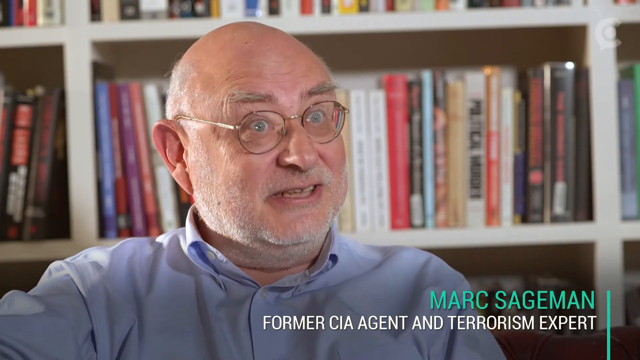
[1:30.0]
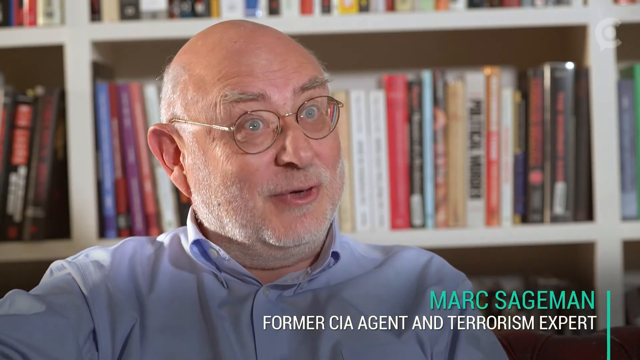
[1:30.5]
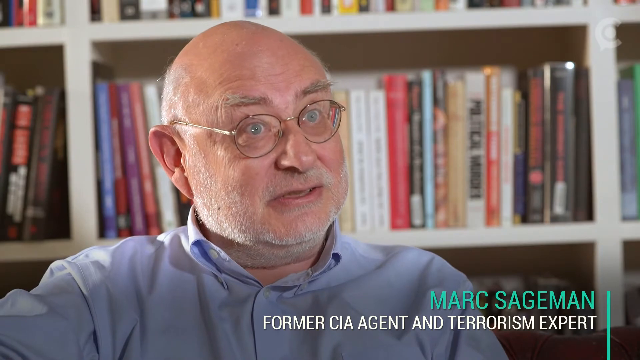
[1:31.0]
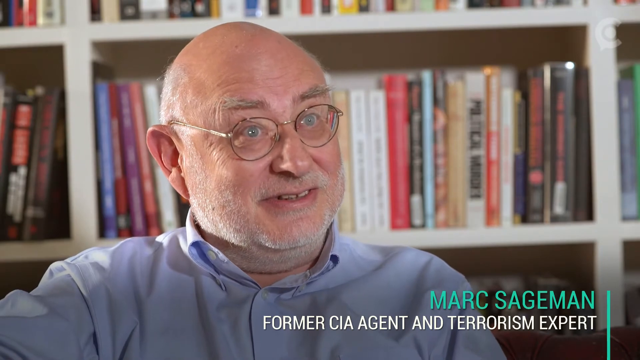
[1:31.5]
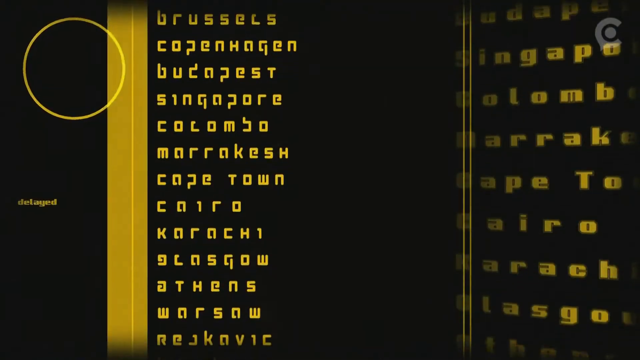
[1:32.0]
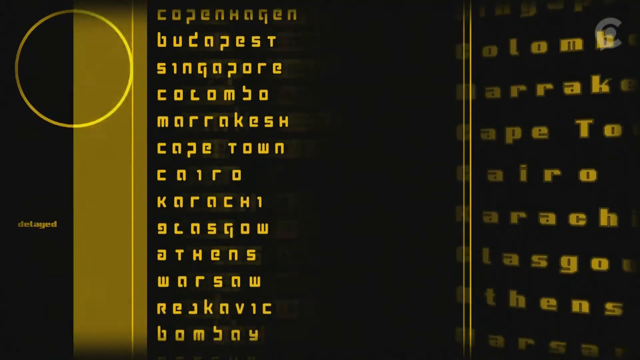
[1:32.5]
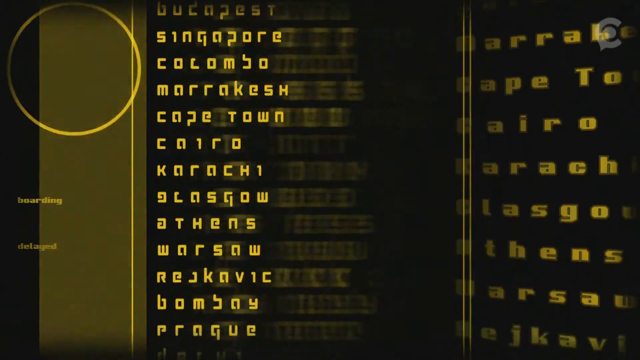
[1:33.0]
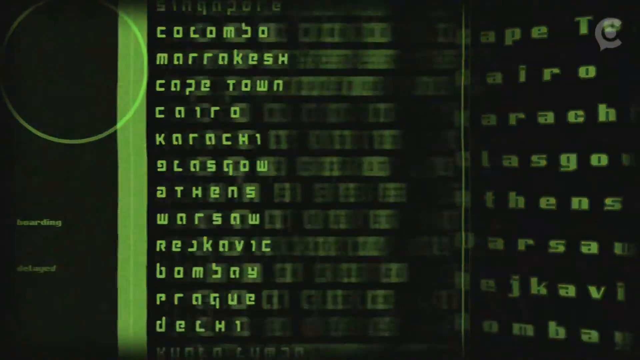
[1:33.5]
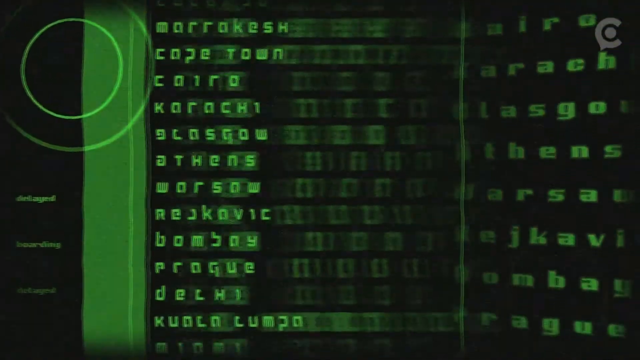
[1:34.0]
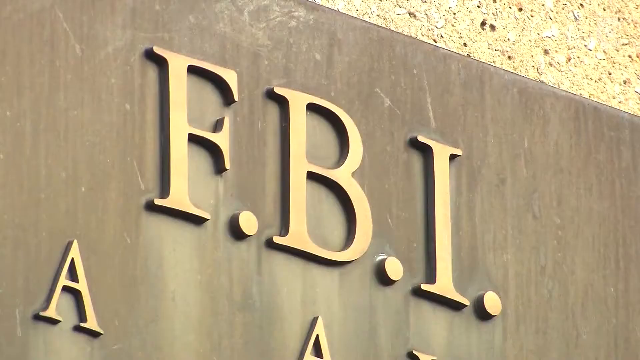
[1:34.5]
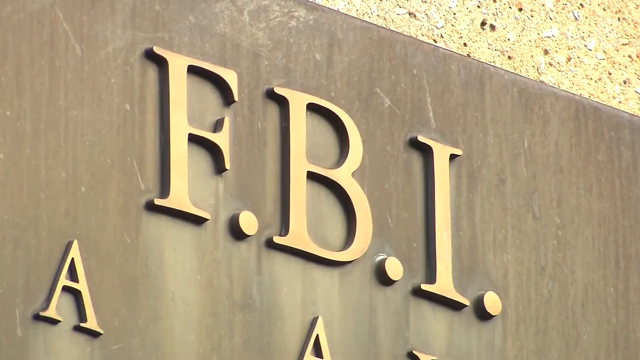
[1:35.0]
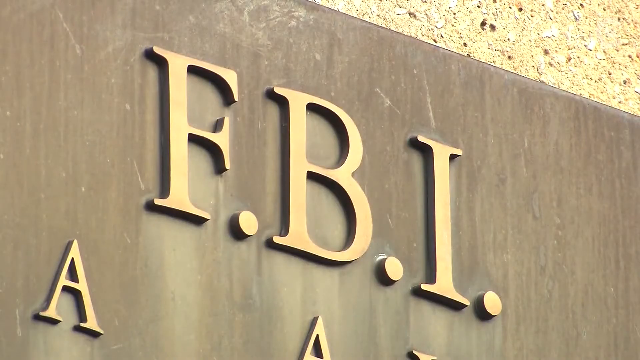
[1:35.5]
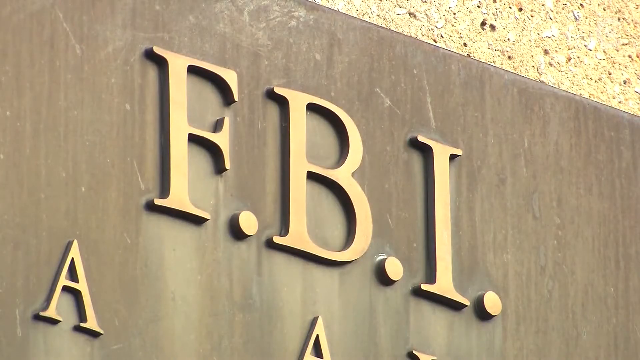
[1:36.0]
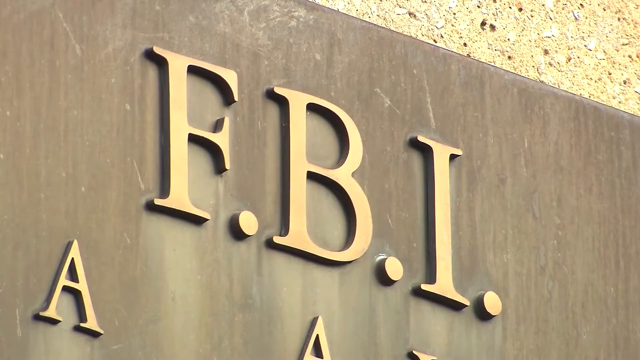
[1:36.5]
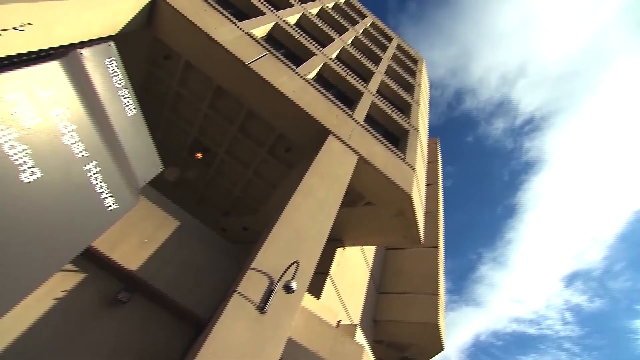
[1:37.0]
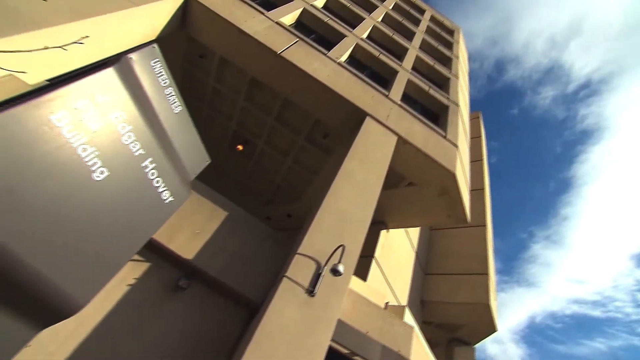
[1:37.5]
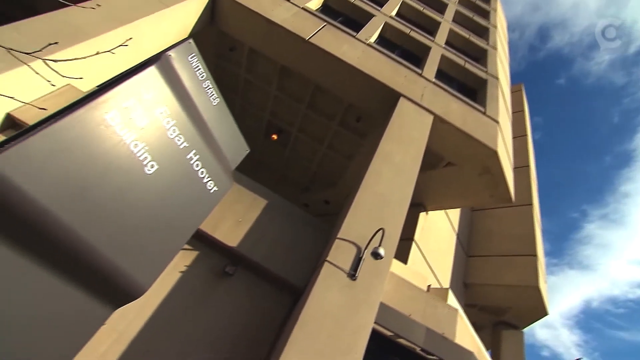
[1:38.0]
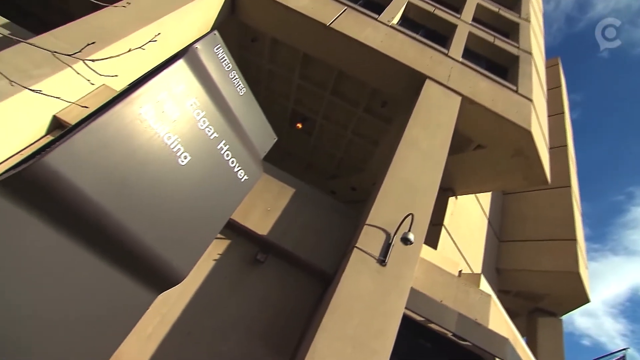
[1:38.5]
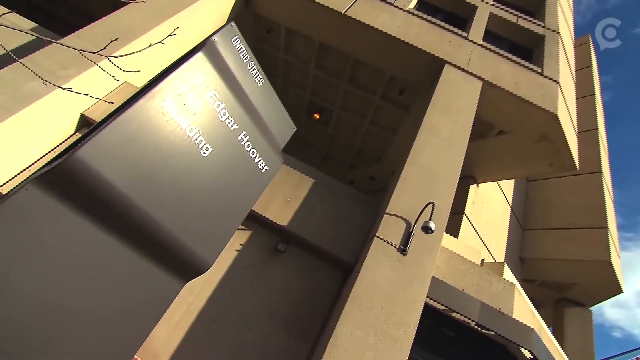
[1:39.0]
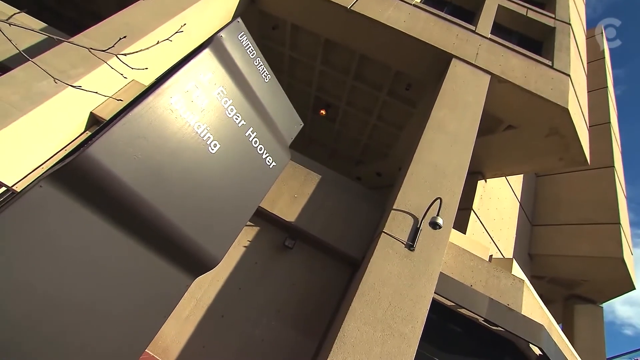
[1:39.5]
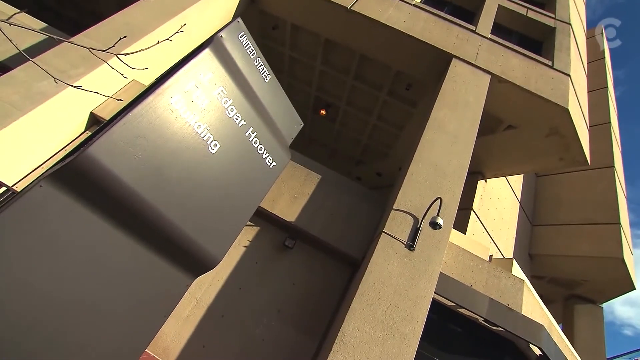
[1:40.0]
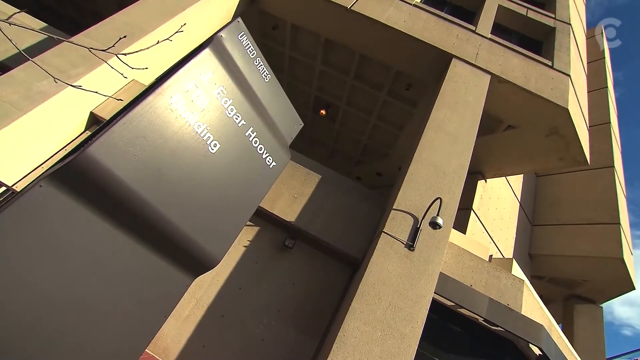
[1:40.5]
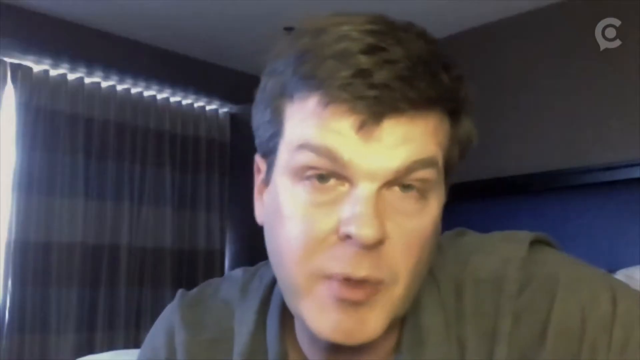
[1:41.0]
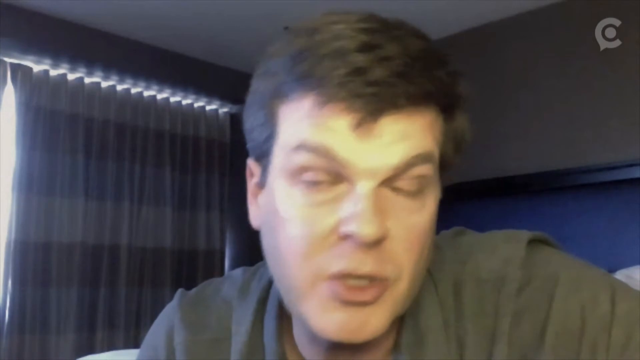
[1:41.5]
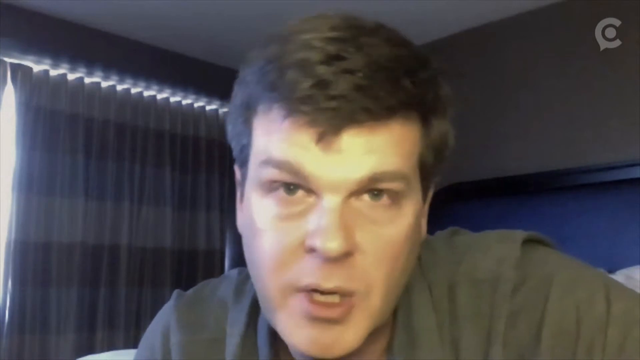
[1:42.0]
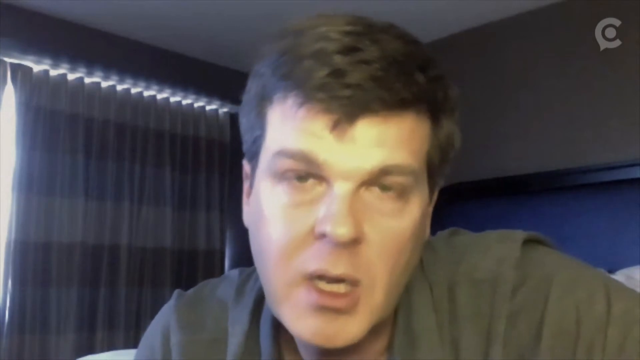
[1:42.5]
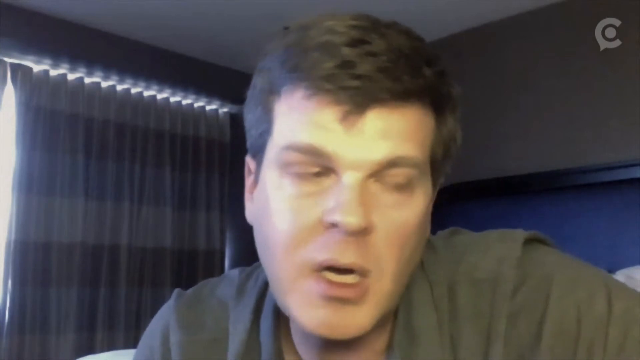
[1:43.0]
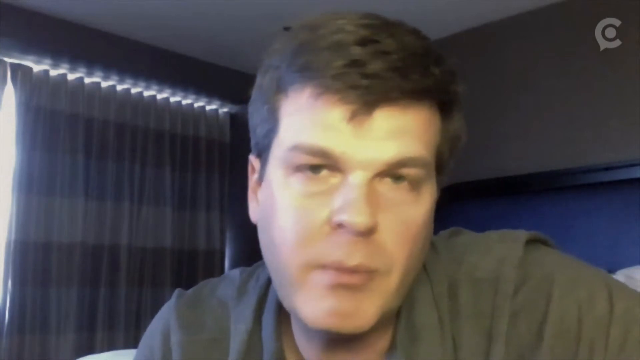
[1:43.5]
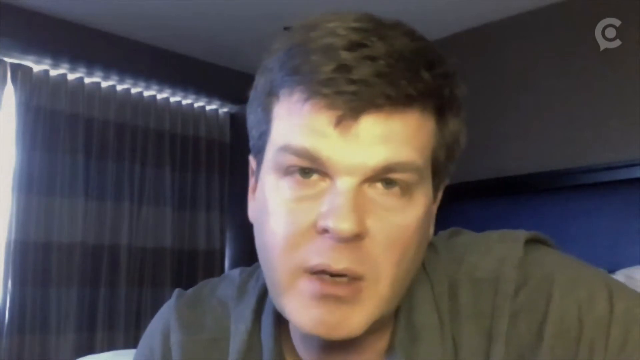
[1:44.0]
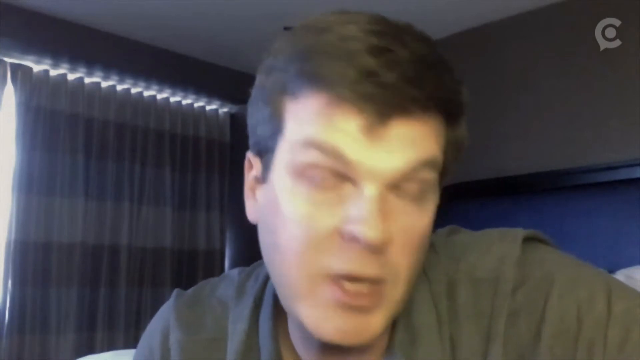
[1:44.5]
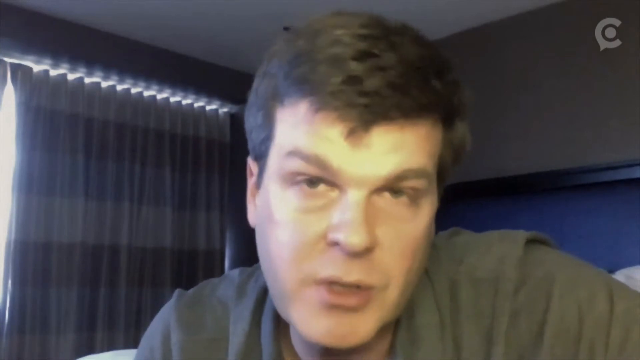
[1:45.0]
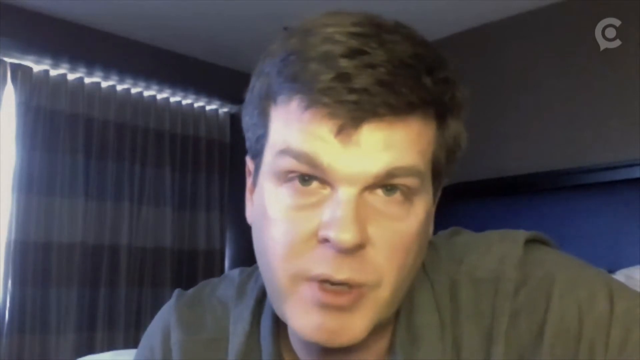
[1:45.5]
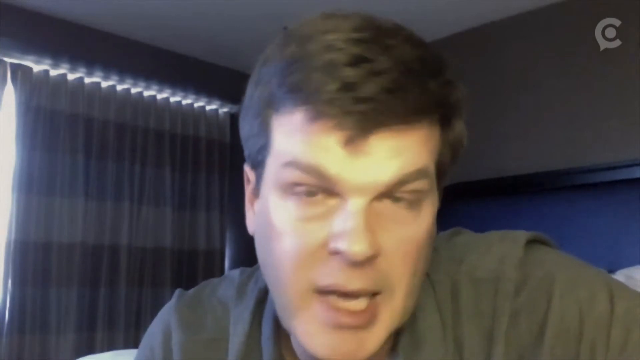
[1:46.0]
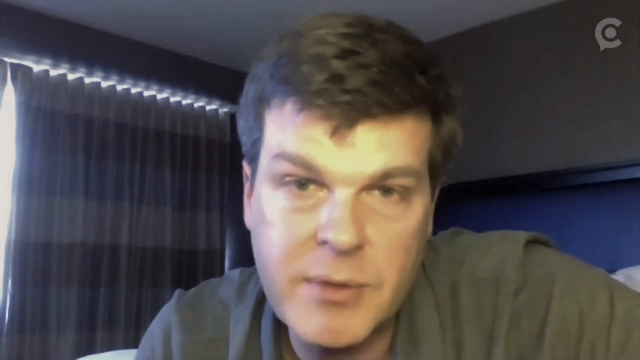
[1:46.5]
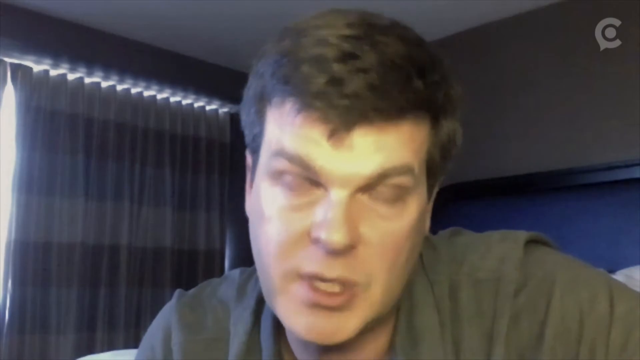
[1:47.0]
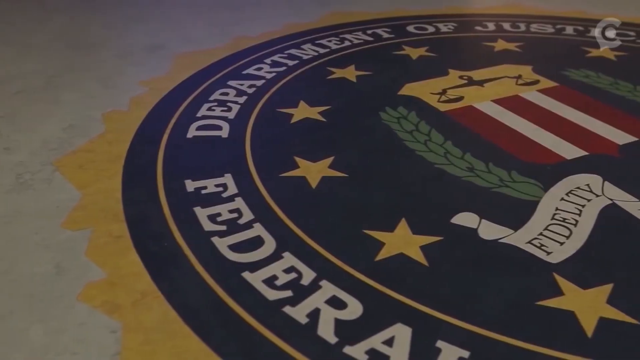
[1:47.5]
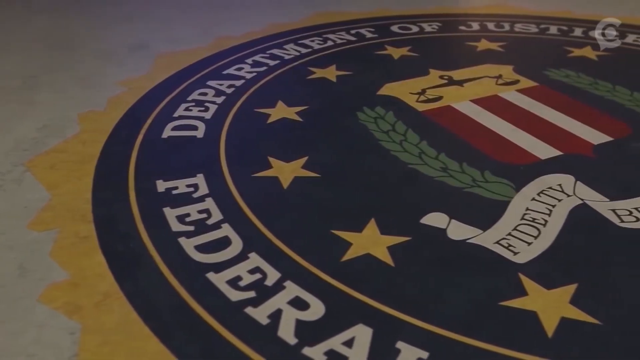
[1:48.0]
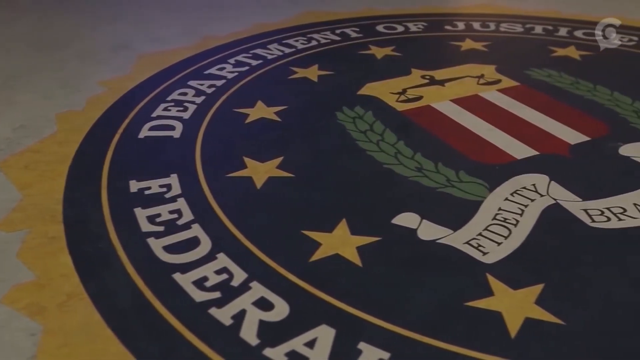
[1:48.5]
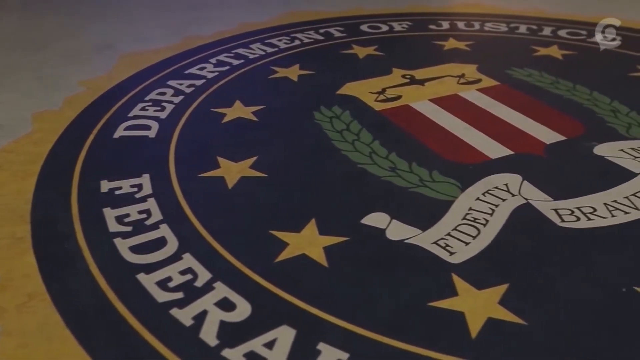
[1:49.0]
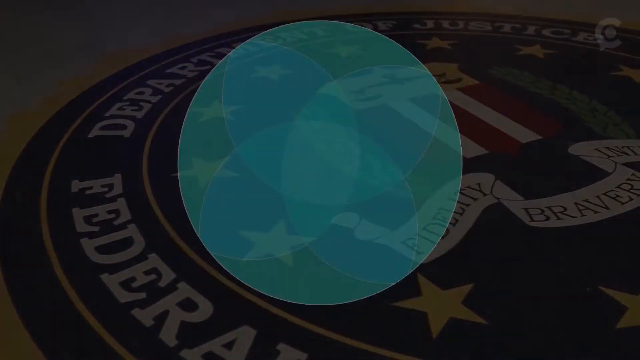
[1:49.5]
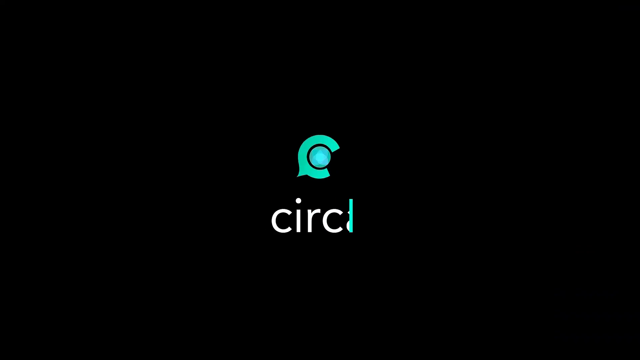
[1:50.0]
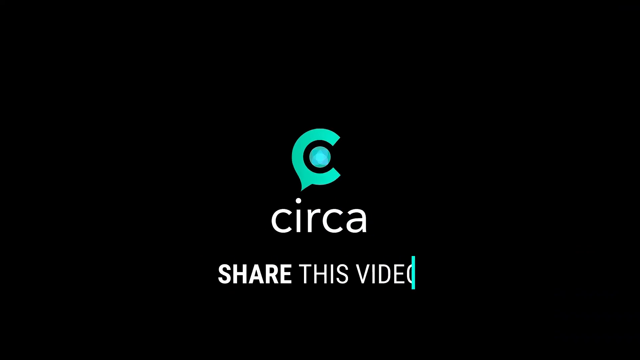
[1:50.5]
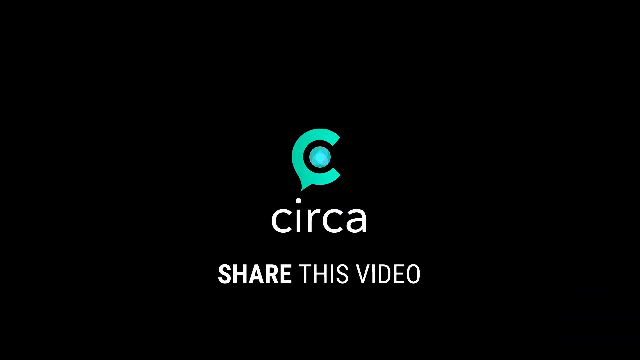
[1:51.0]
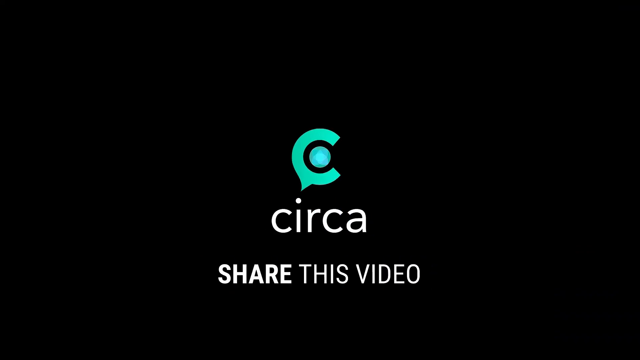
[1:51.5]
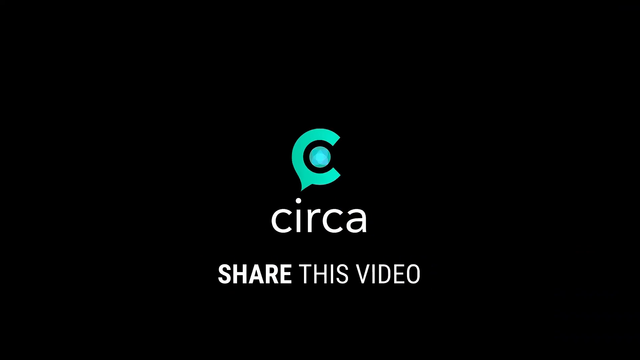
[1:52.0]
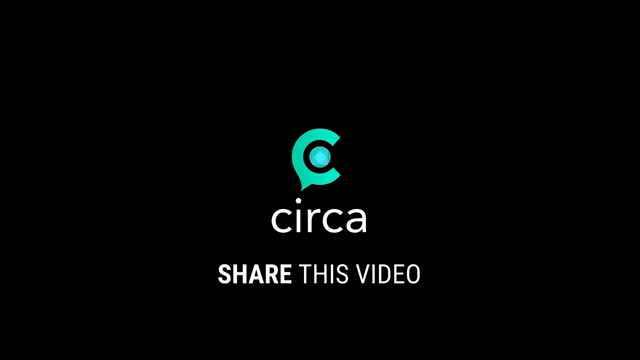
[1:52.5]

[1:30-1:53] A man is seated with his back to a bookshelf, with rows of books on the middle shelf right behind his head. His name appears in the lower right corner of the screen: "Marc Sageman, former CIA agent and terrorism expert." He wears round, wire-framed, owl-shaped eyeglasses, and his pale blue eyes widen behind them as he speaks. His eyebrows are very slightly bushy, and his well-cropped mustache and beard show a faint shadow of gray. He wears a pale blue shirt buttoned up to the neck. The screen then turns black as yellow stylized text scrolls up the screen. Next, the letters "FBI" are seen from the side of a building, on what looks like a concrete wall. A low-angle view looking upward then captures the front of the building's first four floors and the blue sky with white clouds above. A man then speaks in a darkened room, and the FBI shield on the ground is shown as the video ends.